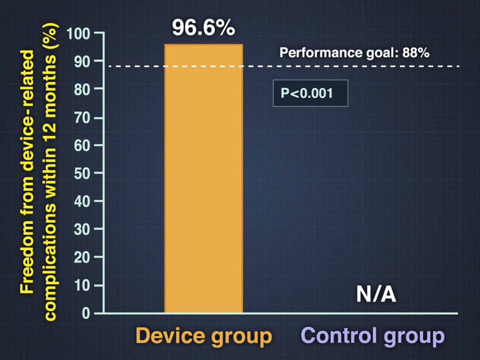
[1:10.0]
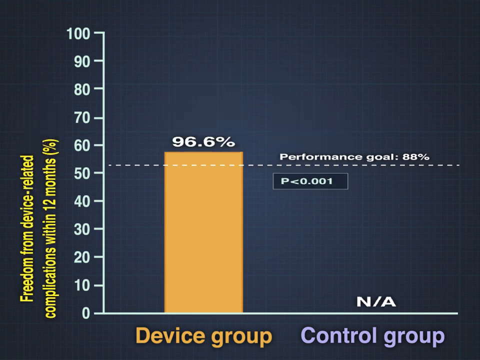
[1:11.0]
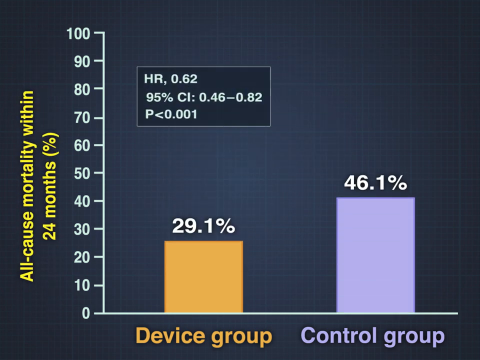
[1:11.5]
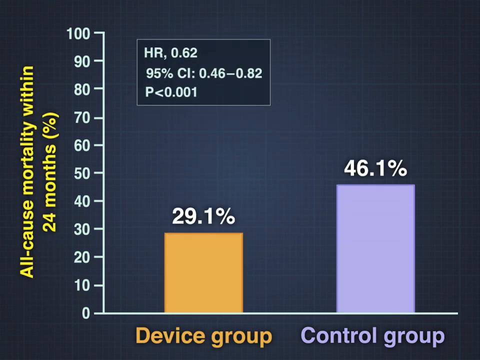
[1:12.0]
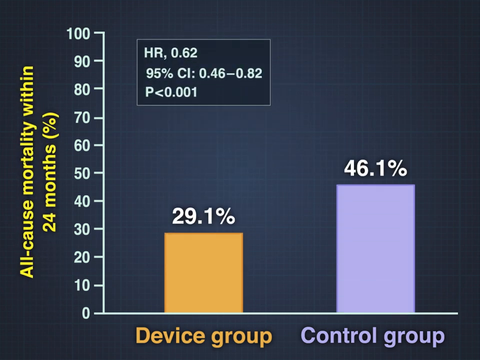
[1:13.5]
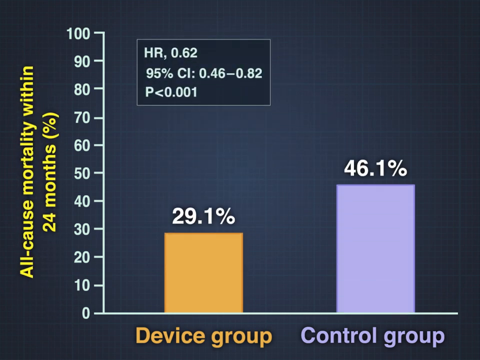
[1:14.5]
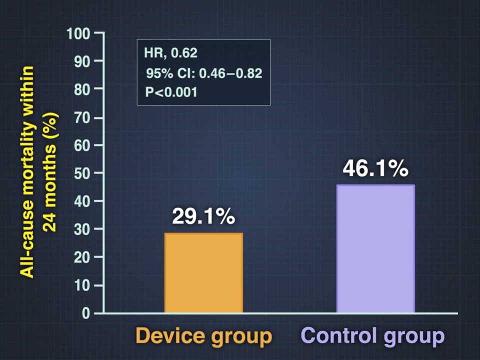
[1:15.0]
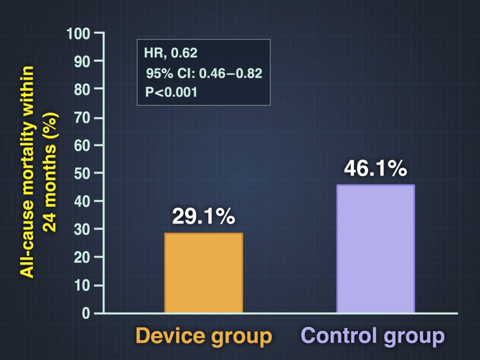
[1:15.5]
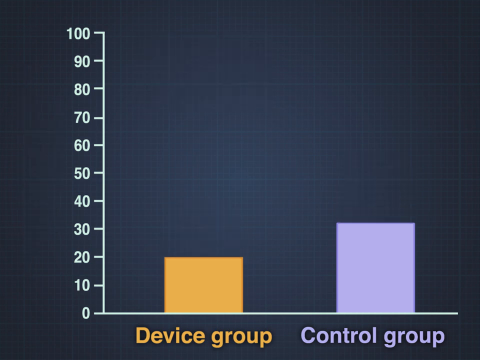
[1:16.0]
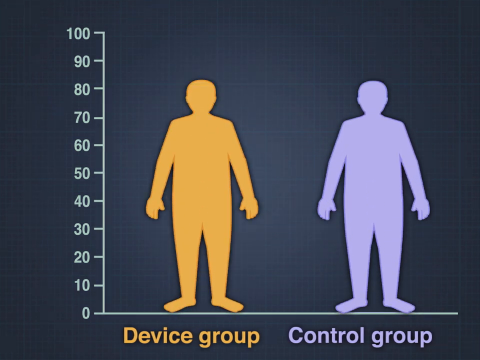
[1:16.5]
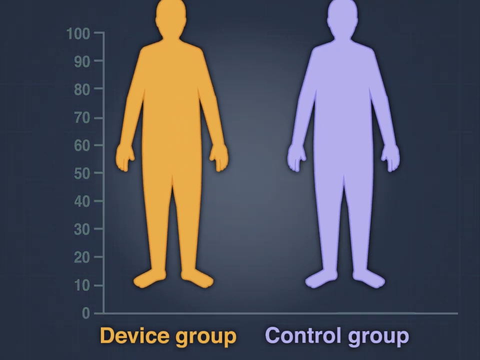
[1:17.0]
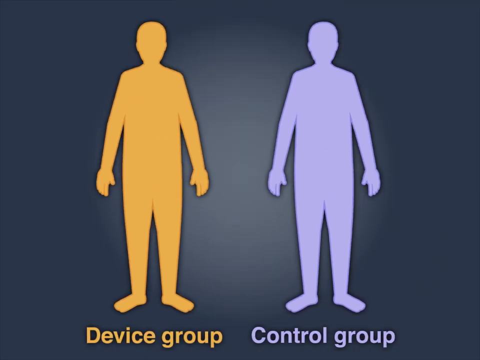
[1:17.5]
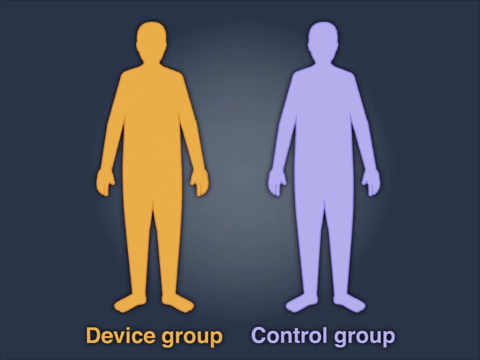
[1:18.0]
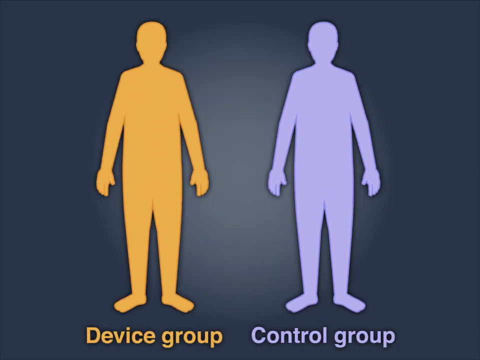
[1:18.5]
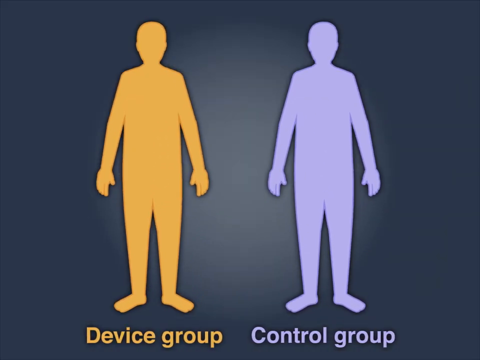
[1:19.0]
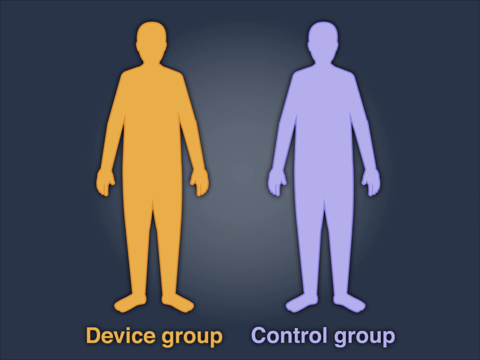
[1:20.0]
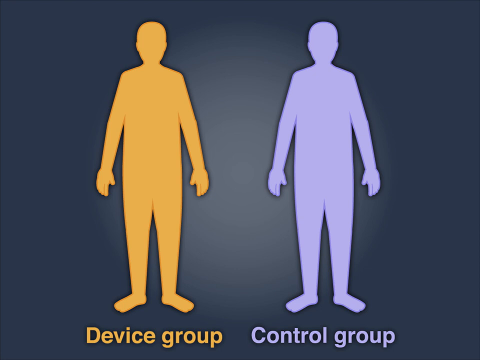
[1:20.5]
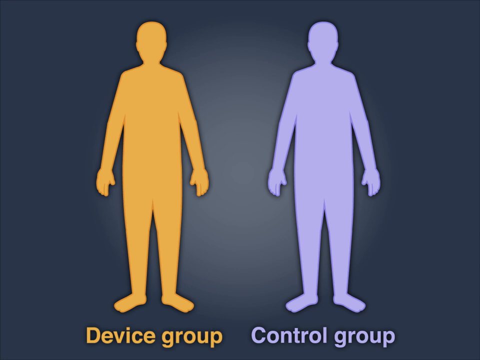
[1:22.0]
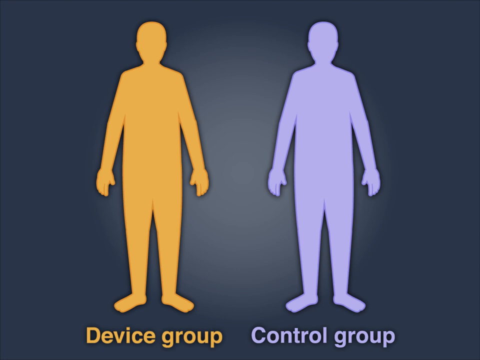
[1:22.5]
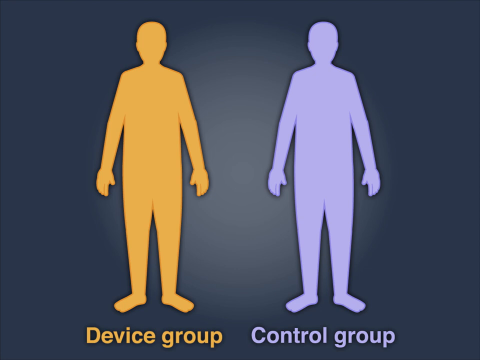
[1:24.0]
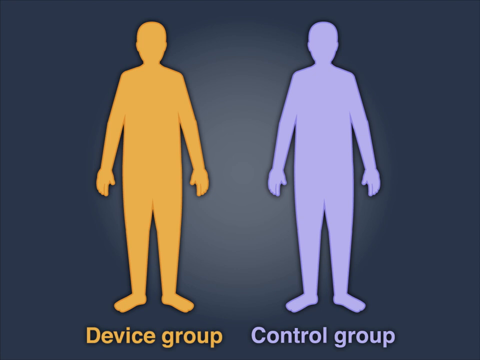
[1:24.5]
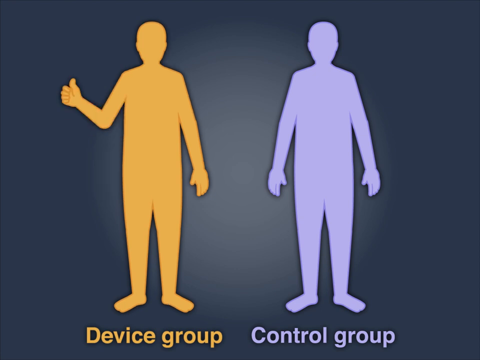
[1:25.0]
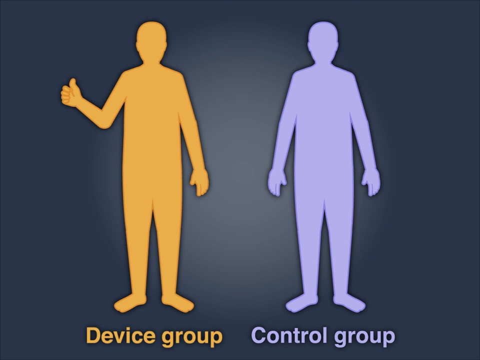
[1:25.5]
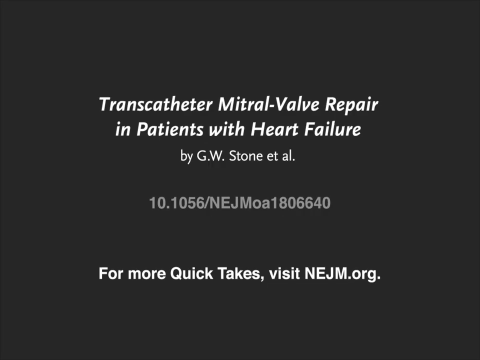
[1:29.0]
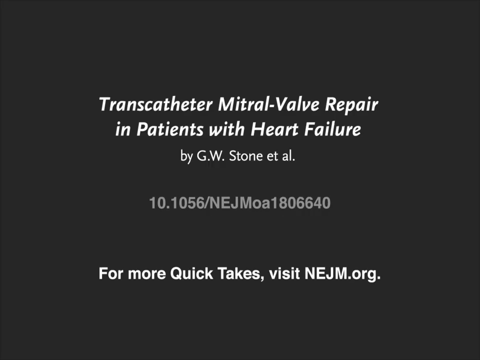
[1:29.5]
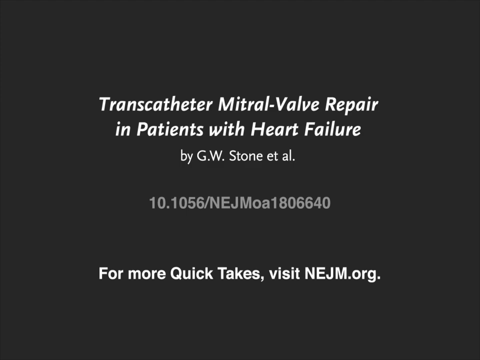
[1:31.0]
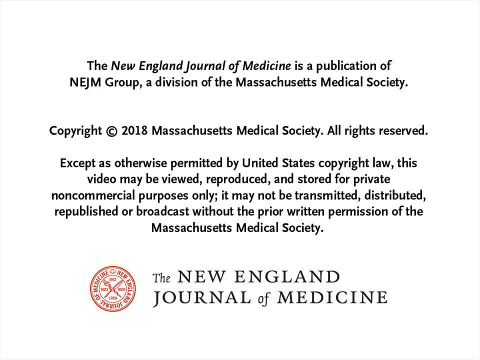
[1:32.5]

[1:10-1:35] A bar graph appears, with "freedom from devices related complications within 12 months" written vertically on the left-hand side of the screen. The graph shows a bar at 96.6%, above the performance goal of 88%. A second bar graph then appears, with "all causes mortality within 24 months" written vertically in yellow on the left side of the screen. Its first bar shows 29.1% and its second bar shows 46.1%.